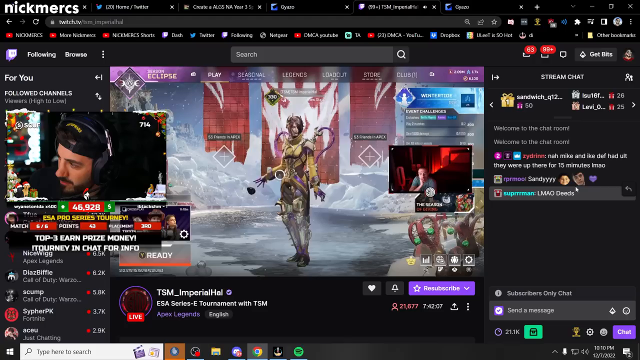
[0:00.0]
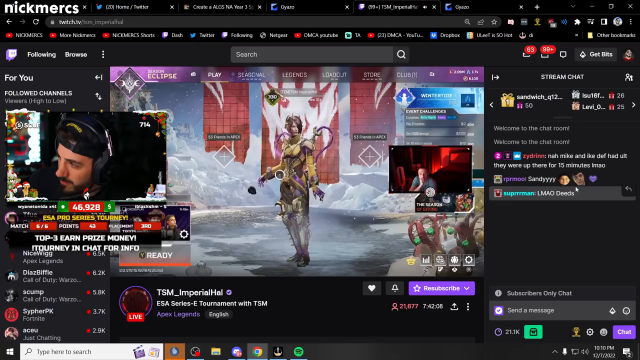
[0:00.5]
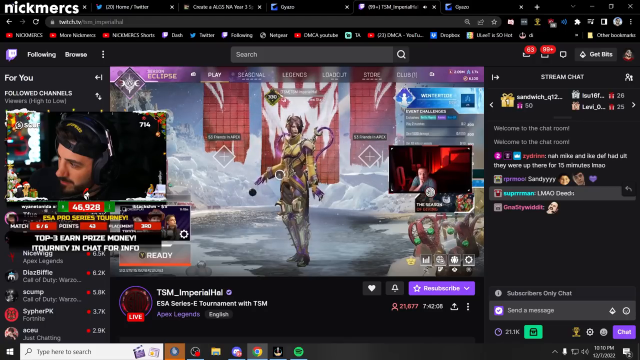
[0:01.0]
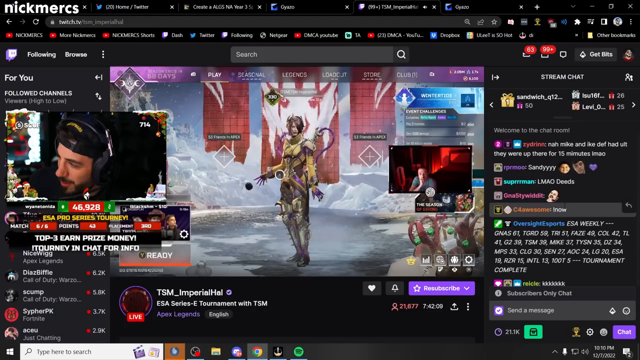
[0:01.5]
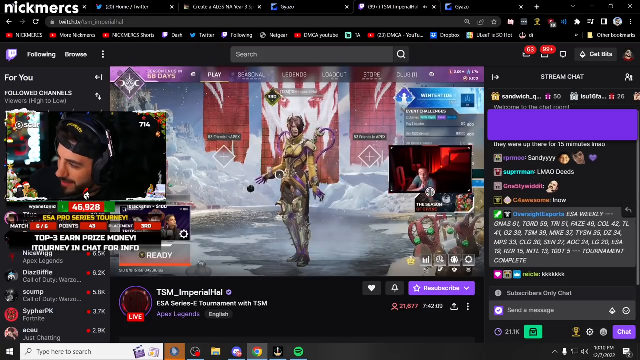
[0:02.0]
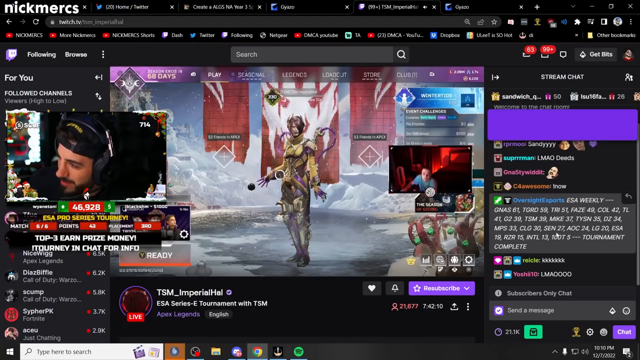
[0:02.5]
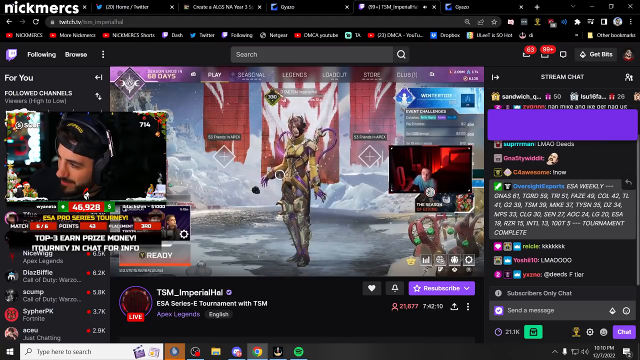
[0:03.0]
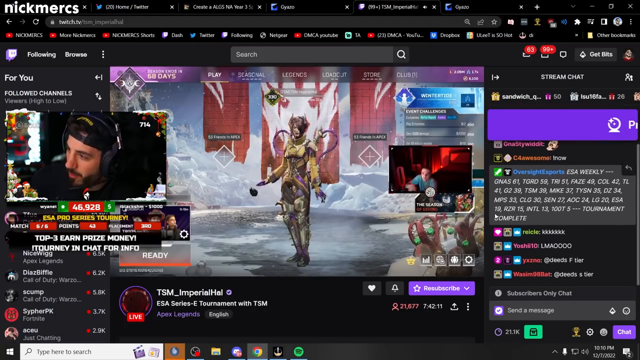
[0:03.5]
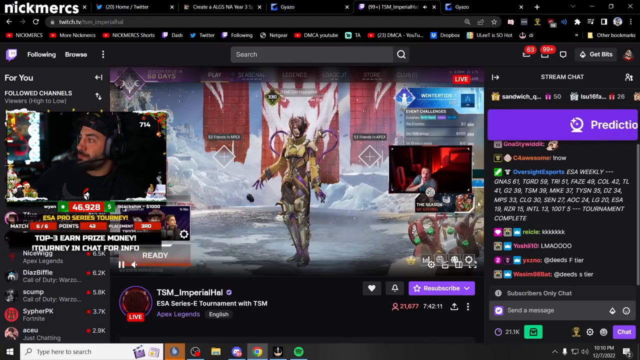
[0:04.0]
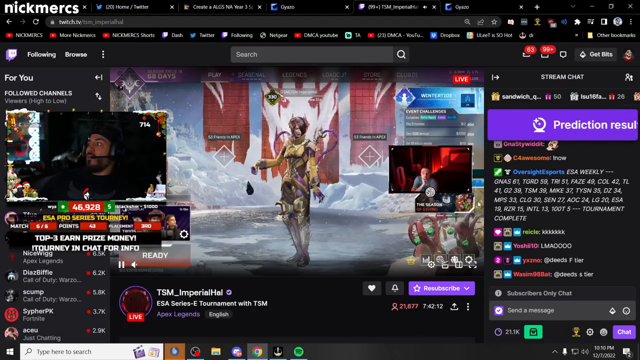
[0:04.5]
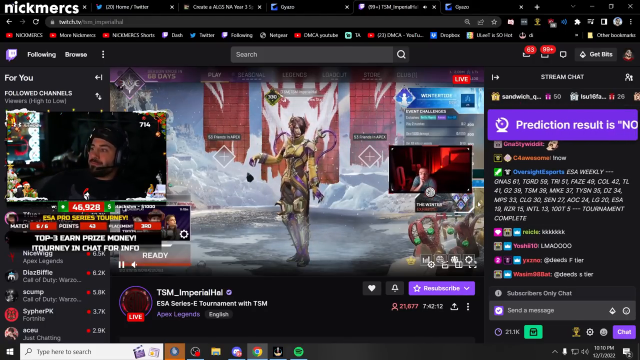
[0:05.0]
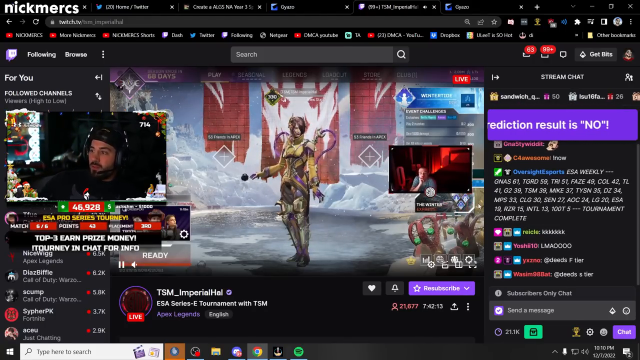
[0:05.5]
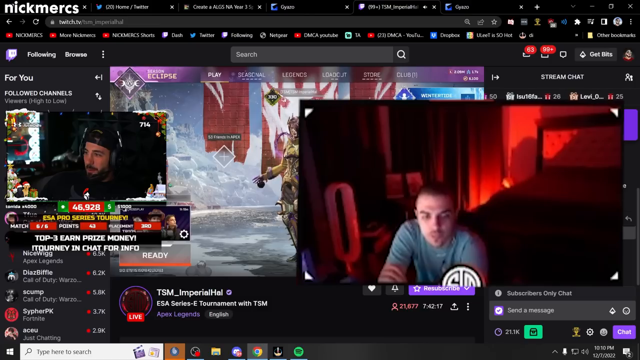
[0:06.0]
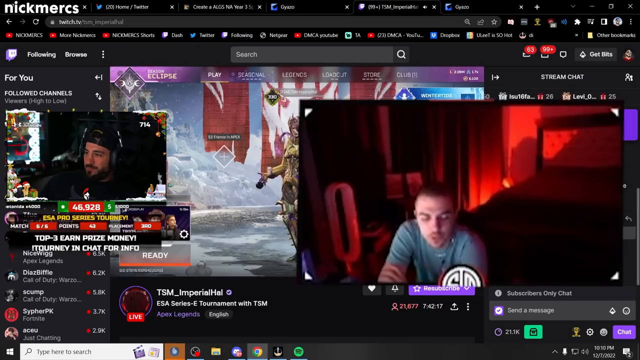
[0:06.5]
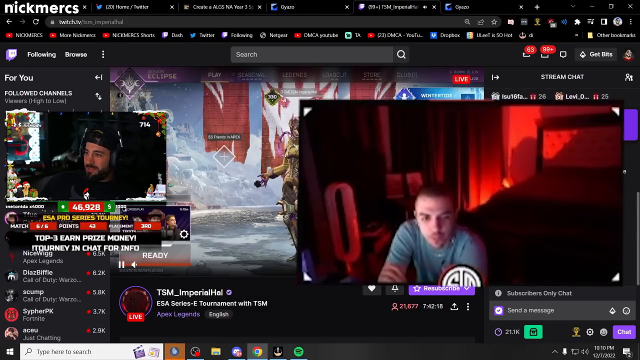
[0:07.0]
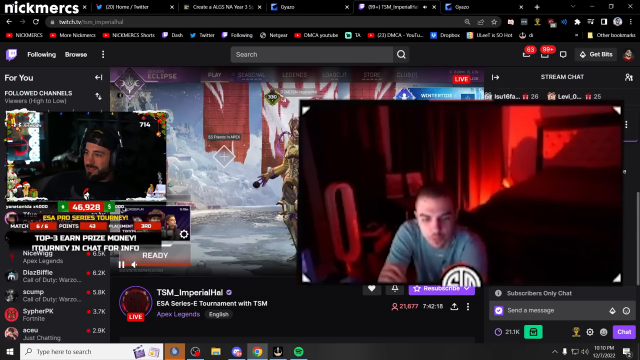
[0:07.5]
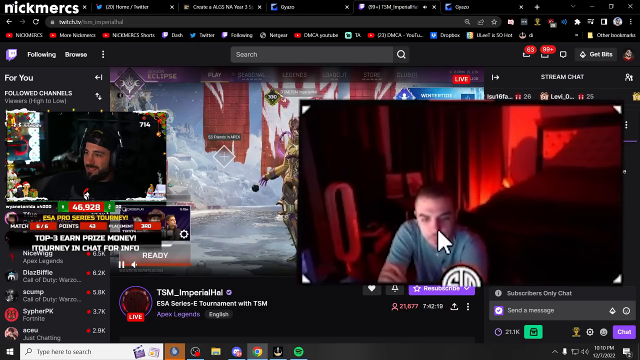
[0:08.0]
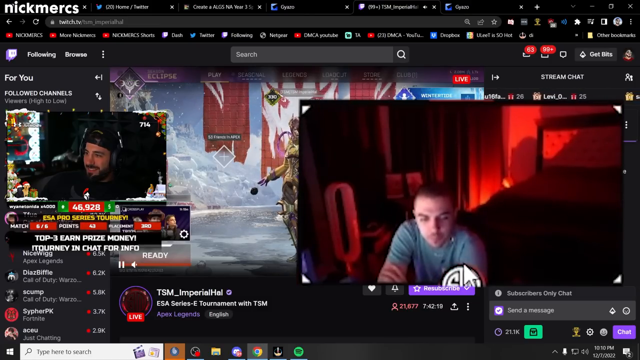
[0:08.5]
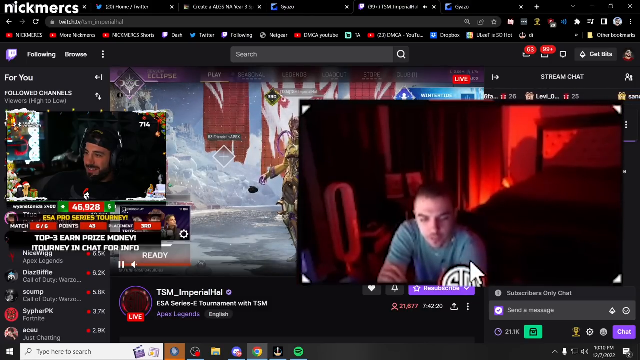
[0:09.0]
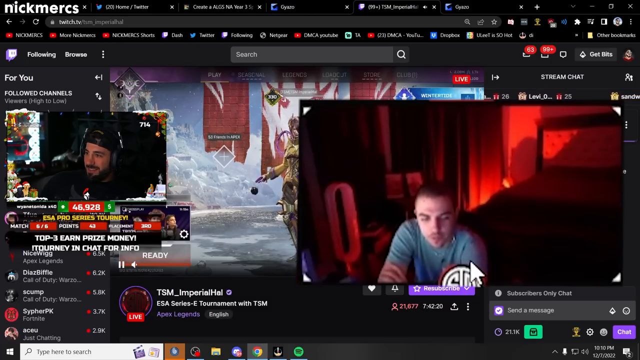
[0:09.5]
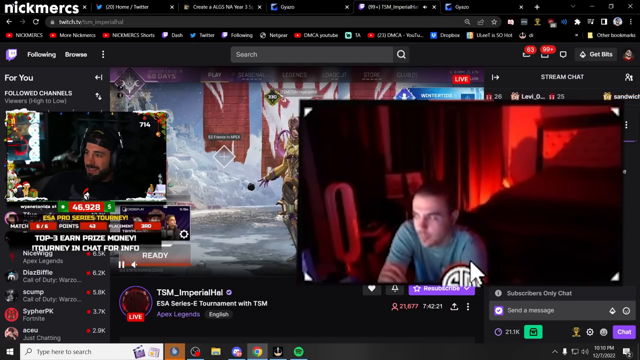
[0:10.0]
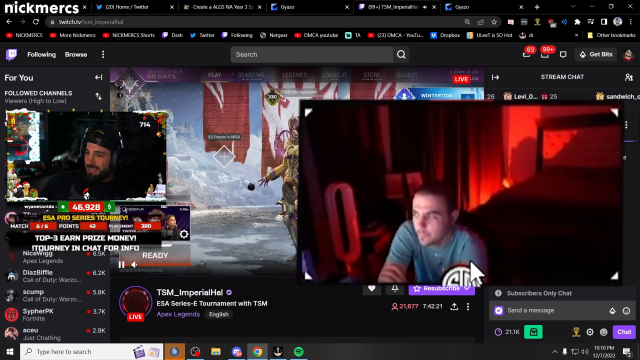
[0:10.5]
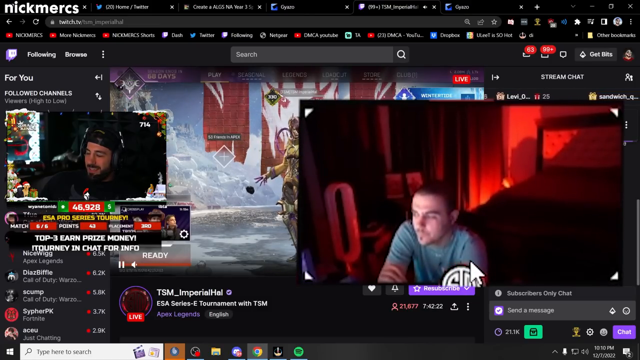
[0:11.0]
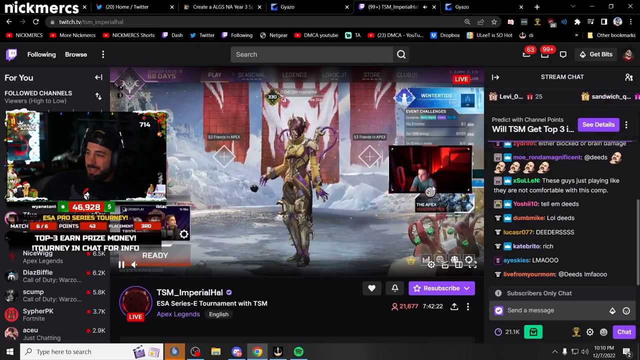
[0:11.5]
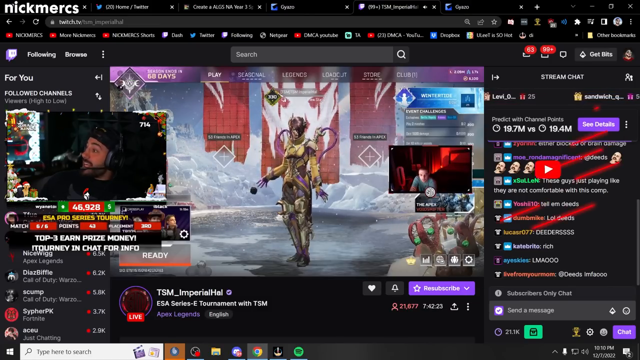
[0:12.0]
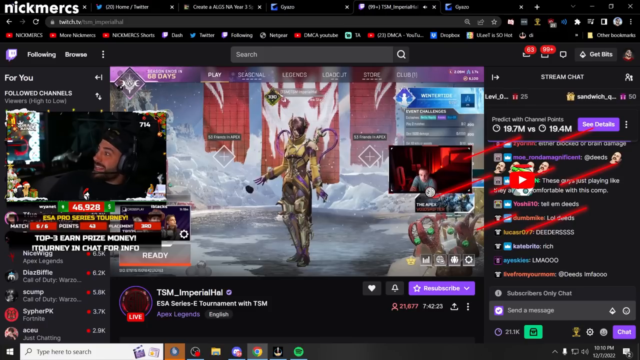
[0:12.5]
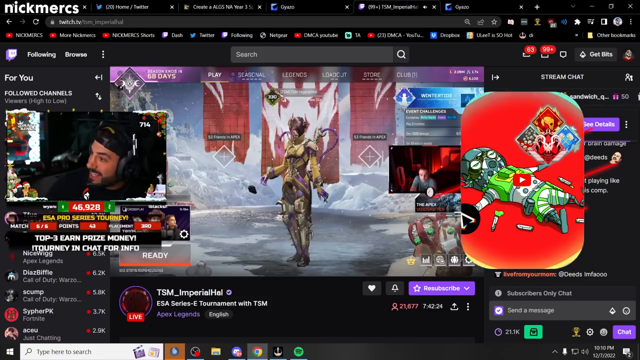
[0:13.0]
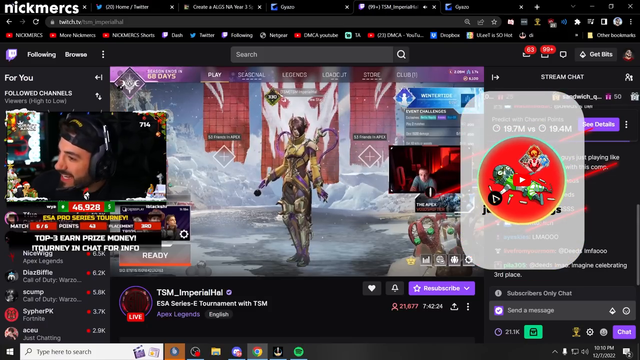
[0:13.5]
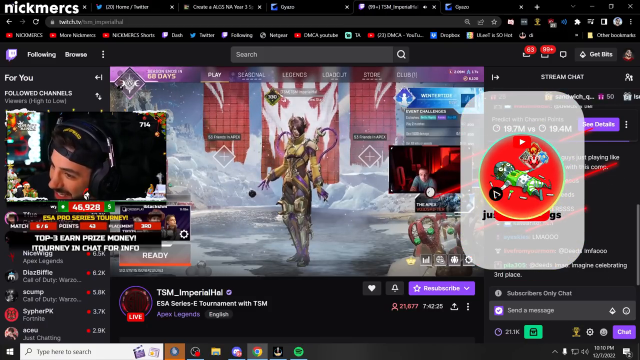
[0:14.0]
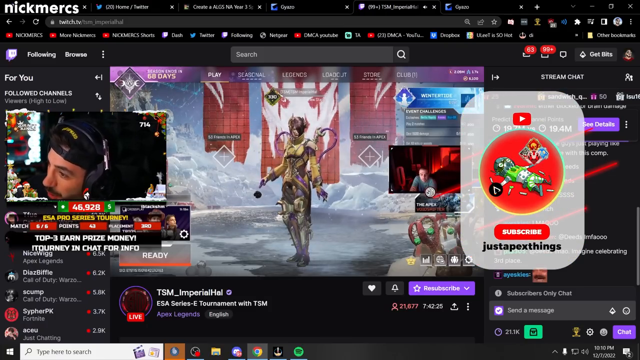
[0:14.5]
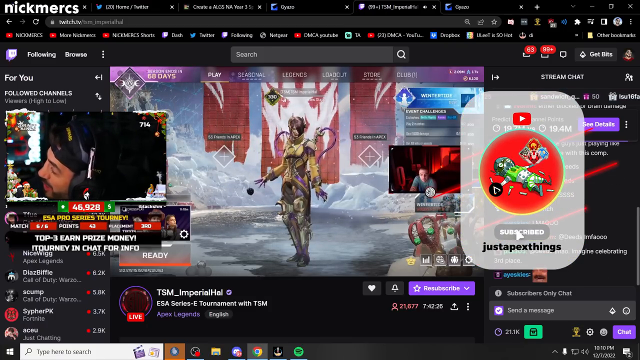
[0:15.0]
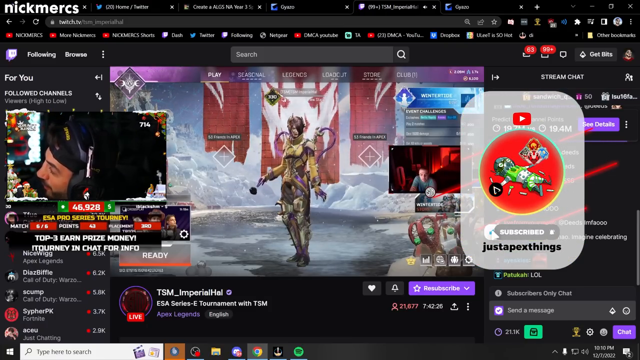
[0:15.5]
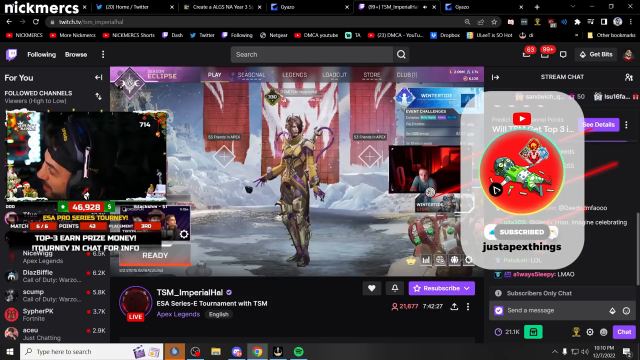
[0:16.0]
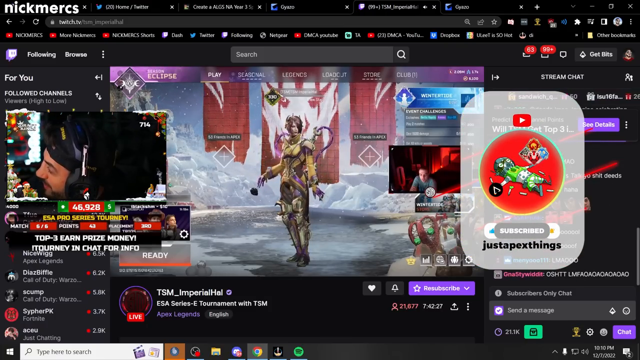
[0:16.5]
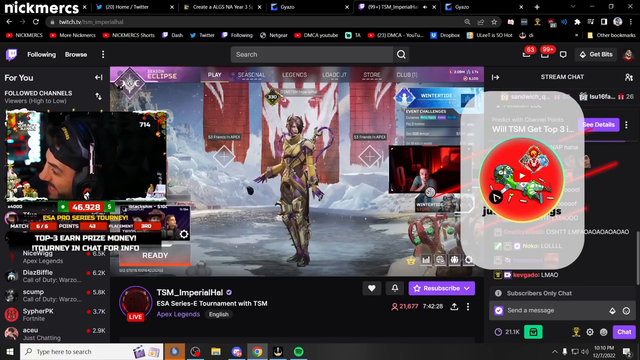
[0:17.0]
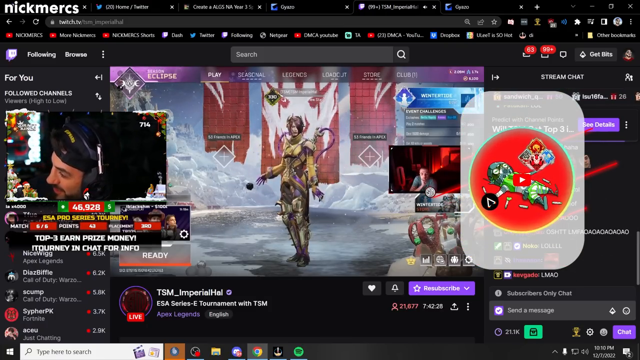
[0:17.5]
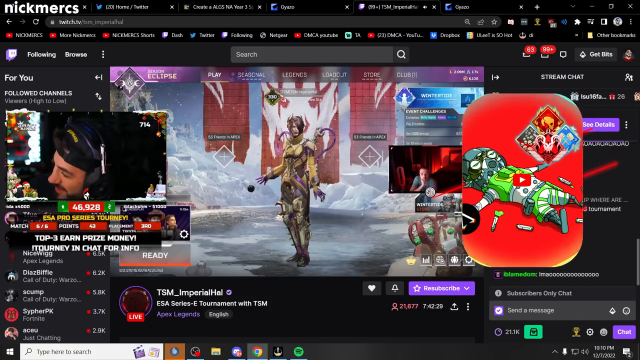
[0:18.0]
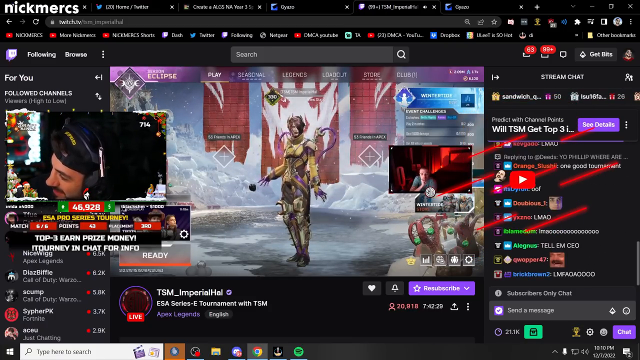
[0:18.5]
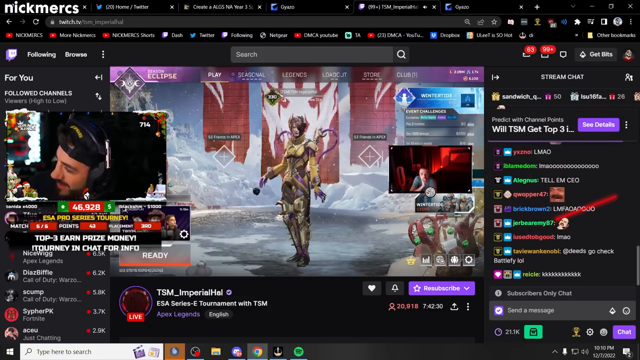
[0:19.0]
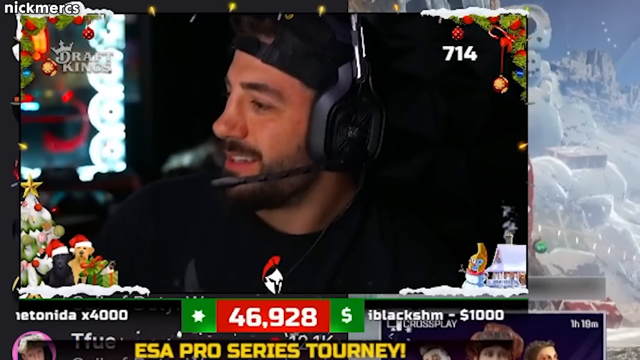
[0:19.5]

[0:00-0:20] The video appears to show a Twitch streamer watching something of a Japanese, romance, samurai sort. It also looks like they are ready to choose a fighter for some sort of fighting match. Another window appears on the screen for someone to offer their opinion on what is happening. Around the screen are various links for other channels being viewed, in the top left or bottom left corner. On the right side is the stream chat, with lots of messages from different users coming in about what is going on. What looks like a purple banner comes across from the right side of the screen reading "prediction is no." Then a pop-up appears on the screen with a YouTube subscribe button for subscribing to the channel. The background of the channels seems to be entirely black, as if in dark mode.